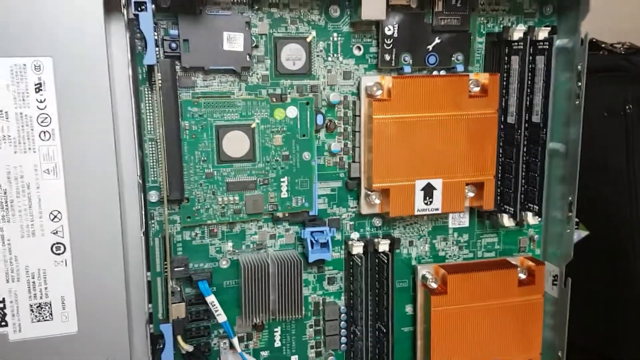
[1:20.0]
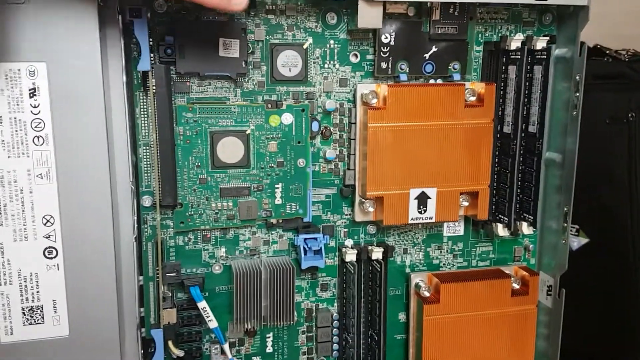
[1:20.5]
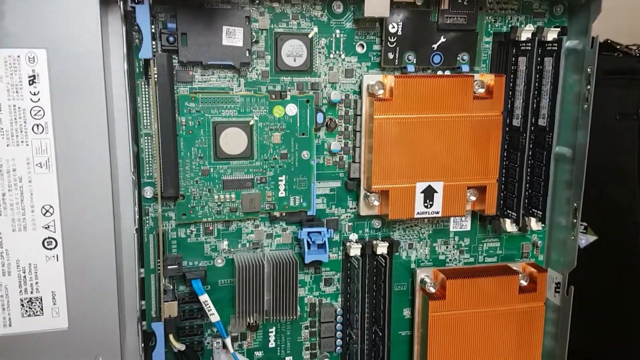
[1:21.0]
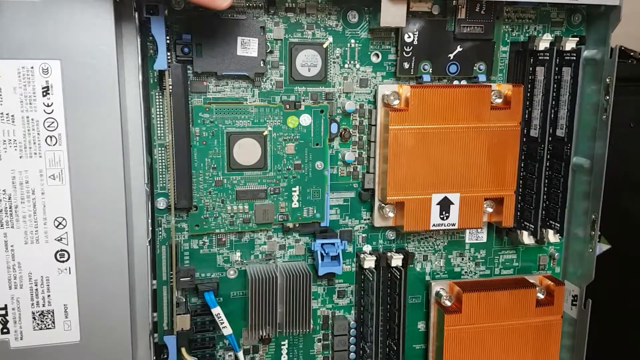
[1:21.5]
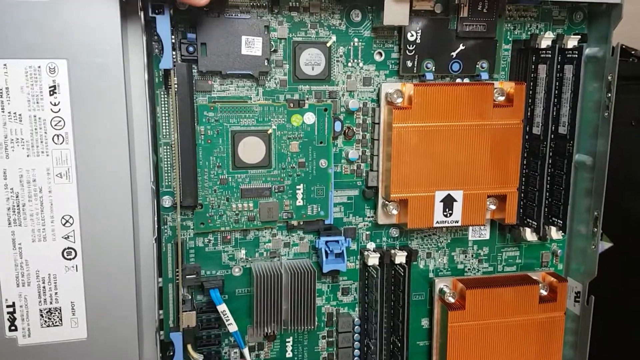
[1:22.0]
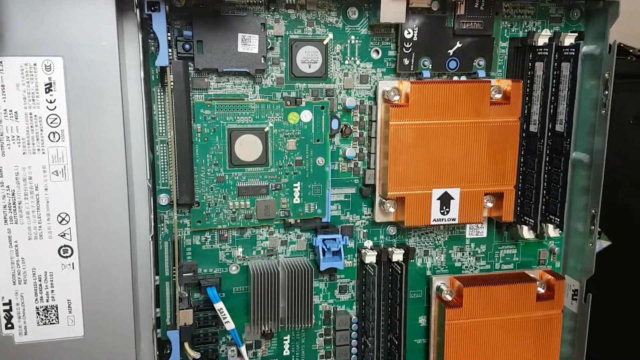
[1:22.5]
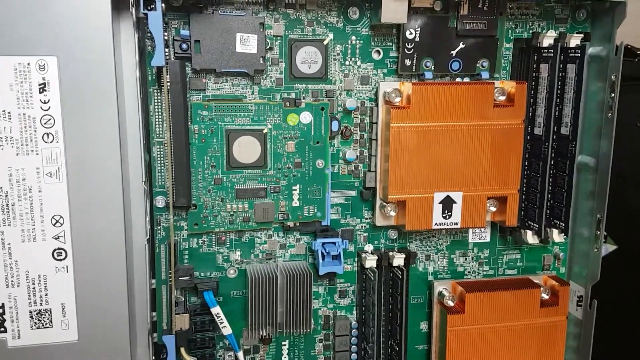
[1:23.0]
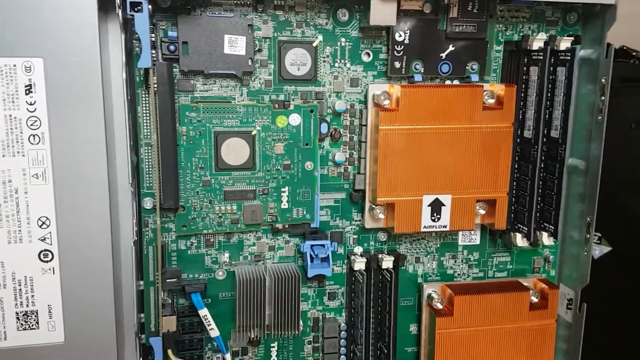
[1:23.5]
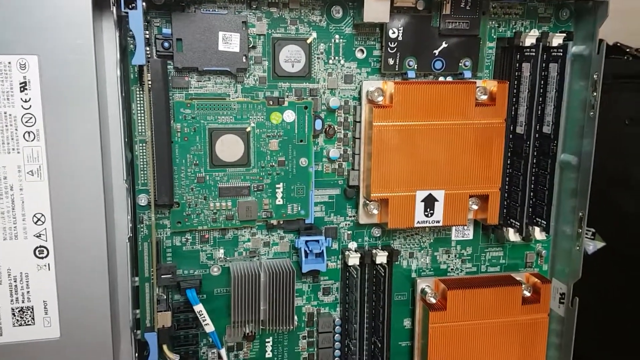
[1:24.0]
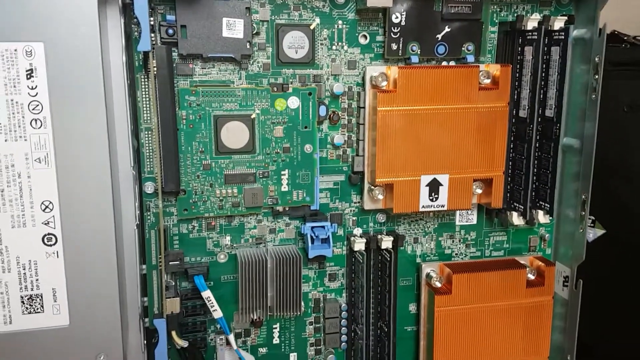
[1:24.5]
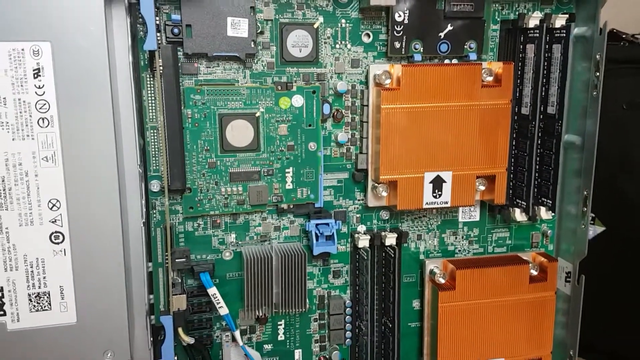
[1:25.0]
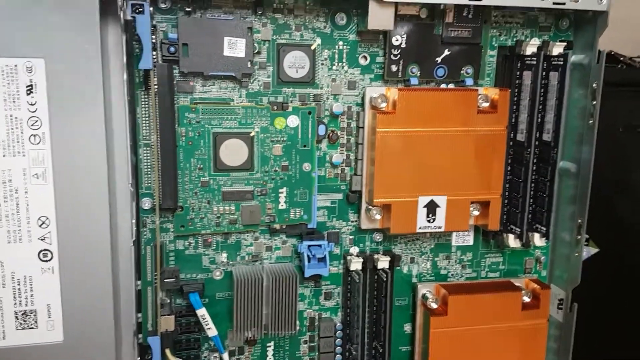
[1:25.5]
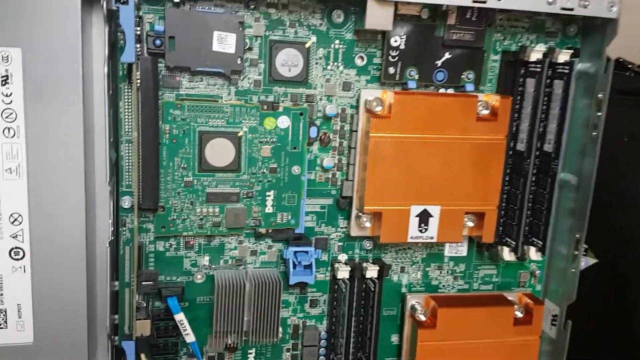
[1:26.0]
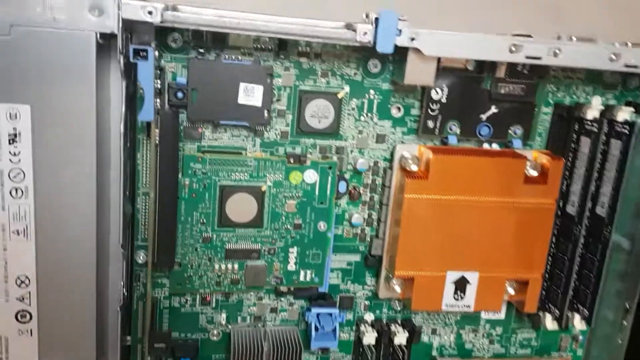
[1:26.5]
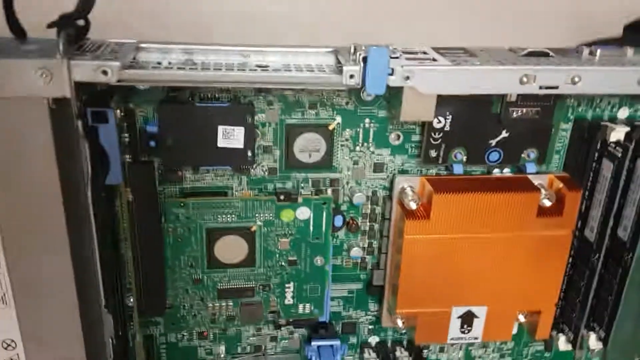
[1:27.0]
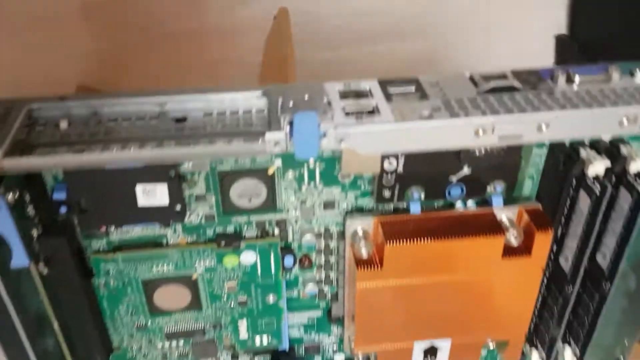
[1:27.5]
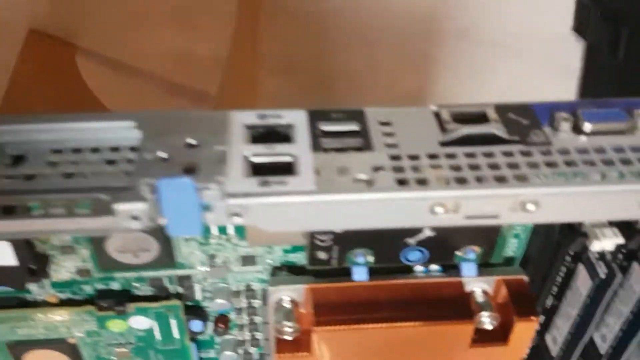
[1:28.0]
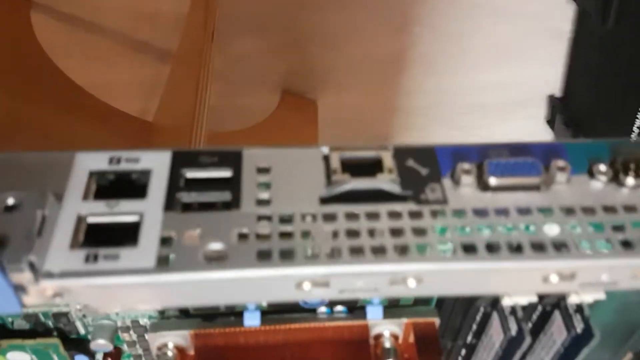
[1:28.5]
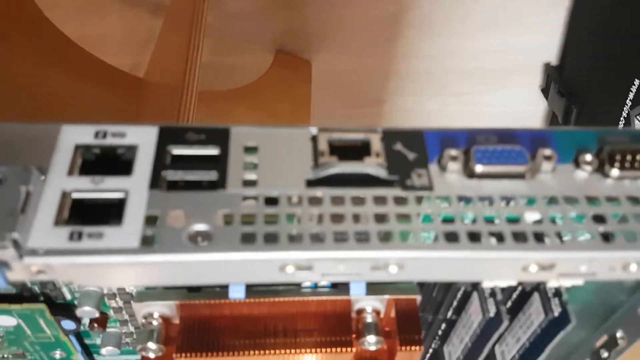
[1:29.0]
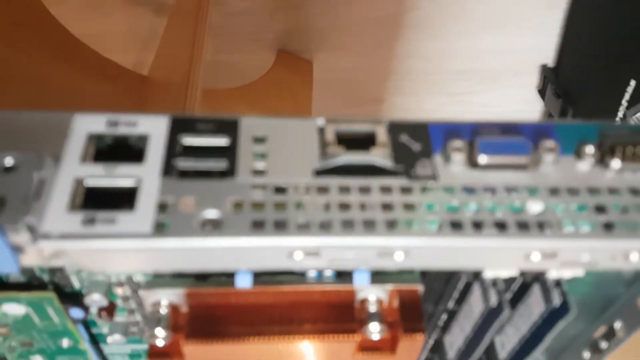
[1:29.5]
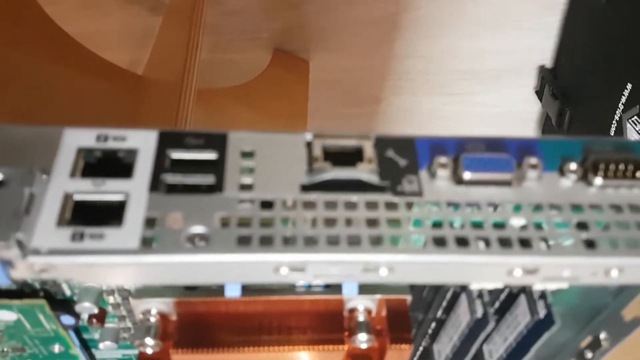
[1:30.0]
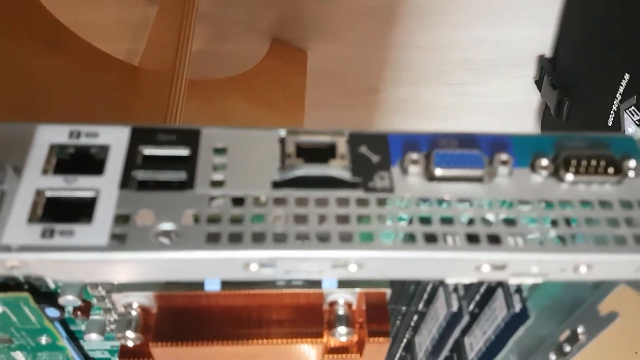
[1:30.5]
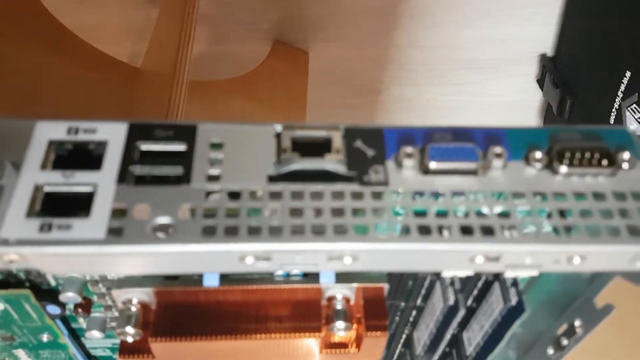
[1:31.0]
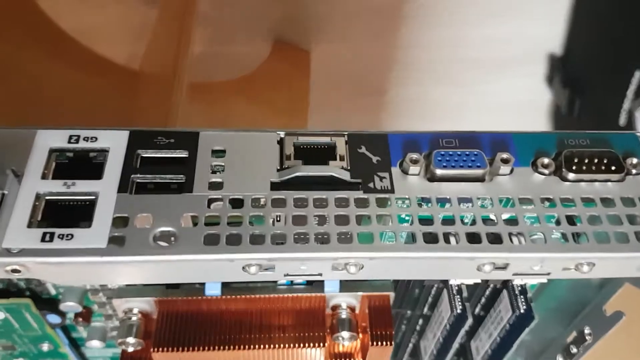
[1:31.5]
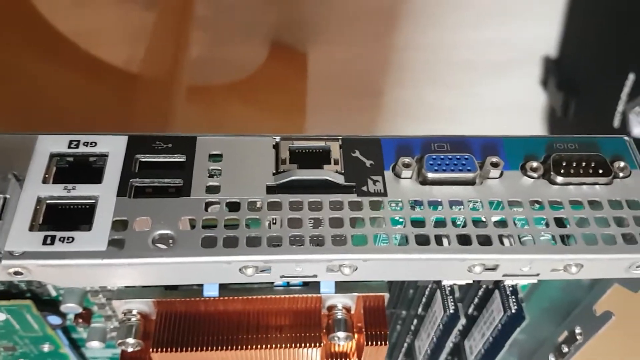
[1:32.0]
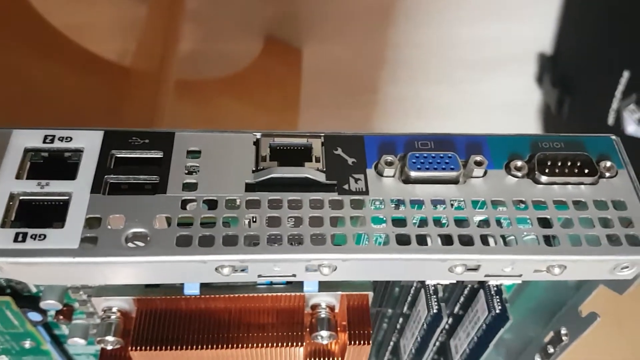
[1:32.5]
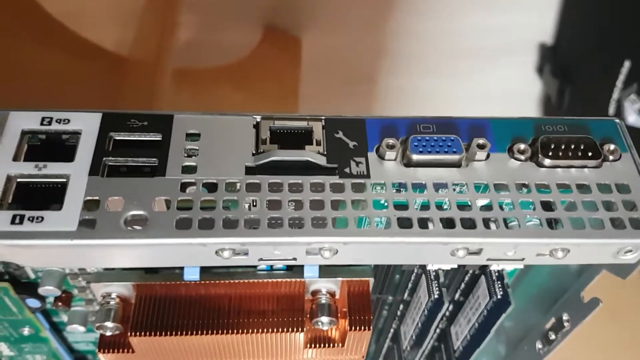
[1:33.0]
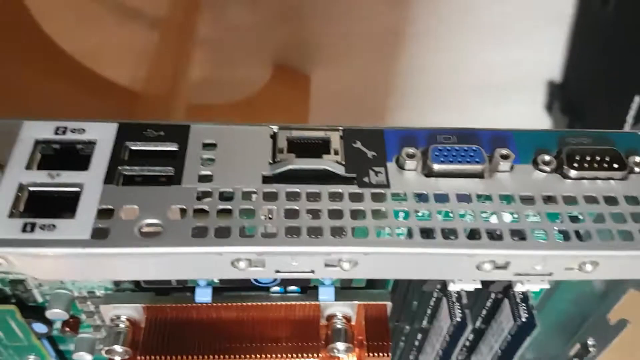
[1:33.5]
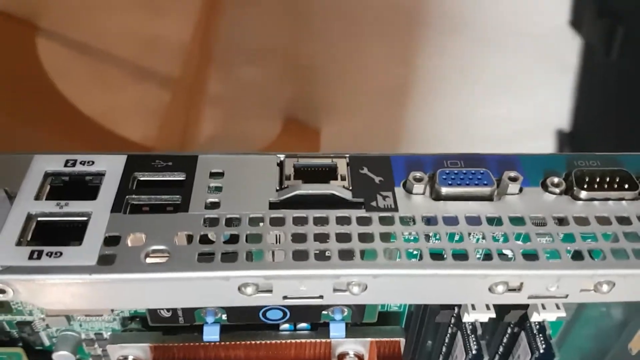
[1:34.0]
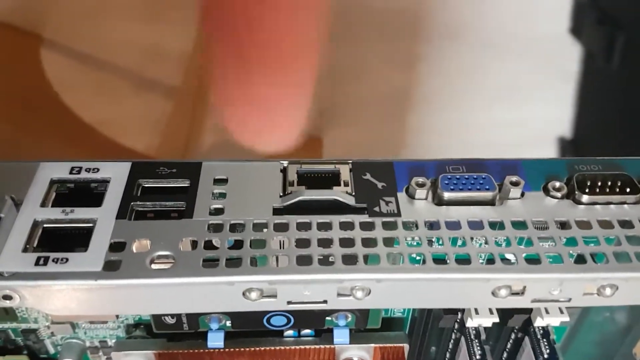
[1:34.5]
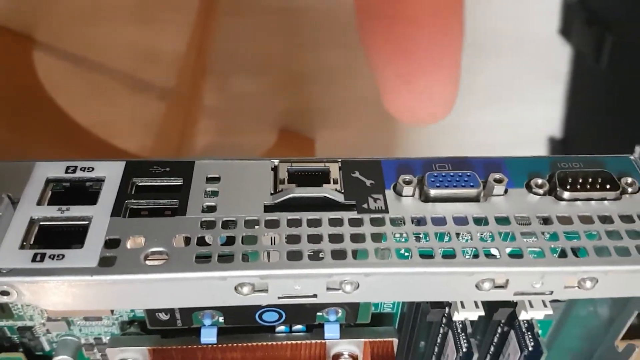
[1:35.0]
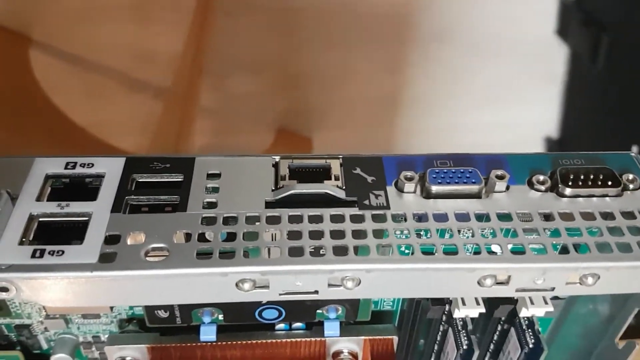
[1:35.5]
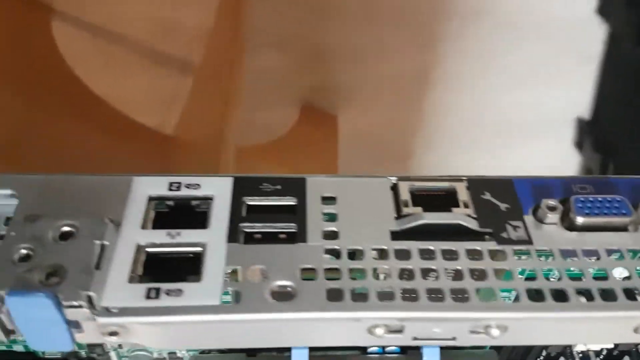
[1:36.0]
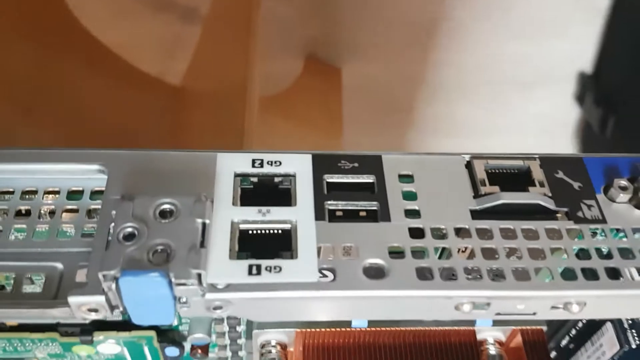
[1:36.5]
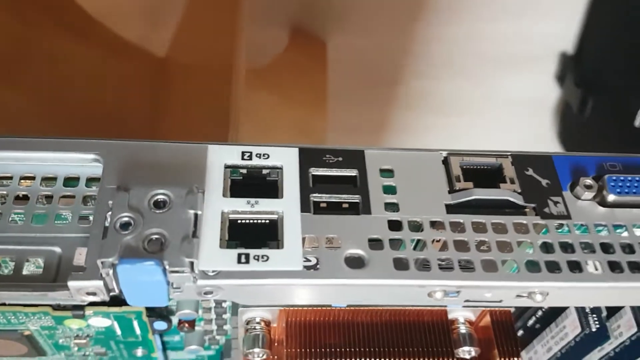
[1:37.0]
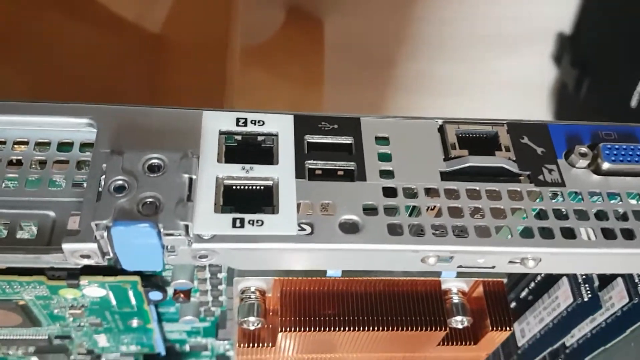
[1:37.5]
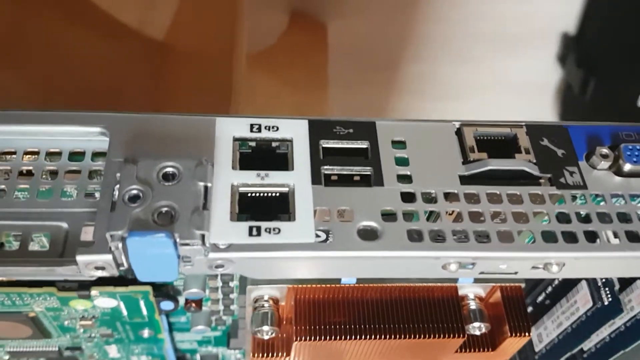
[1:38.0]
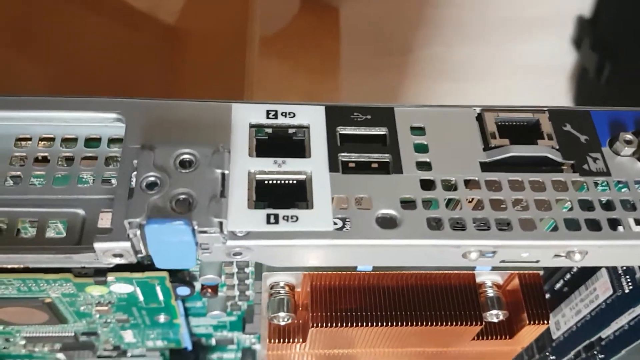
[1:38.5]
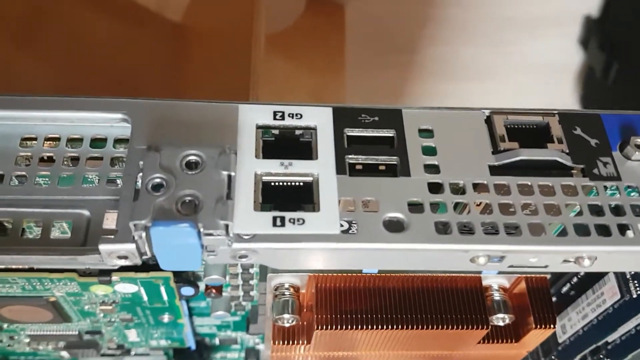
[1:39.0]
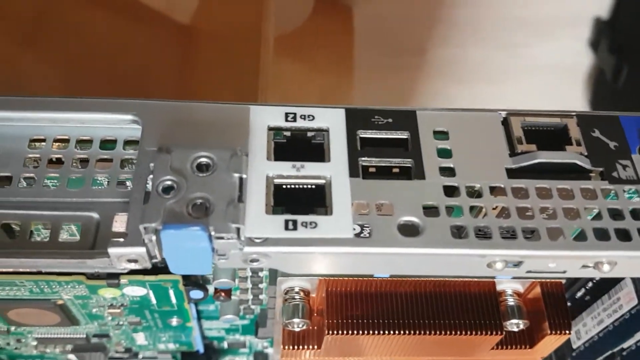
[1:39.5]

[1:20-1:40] The shot starts with an overview of the motherboard: a green plastic board with various components, resistors and other parts attached, including RAM, processors and capacitors. Silver casing surrounds the outside of the motherboard. He eventually turns the camera to face the side or back of the casing, revealing several ports. The ports seem to be for Ethernet cables, USB cables and HDMI cables, along with other unidentifiable ports. The ports tend to be black, but the one for the HDMI cable is blue. The outside casing also features holes.